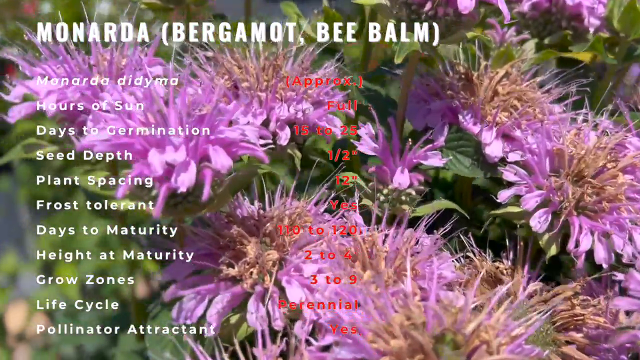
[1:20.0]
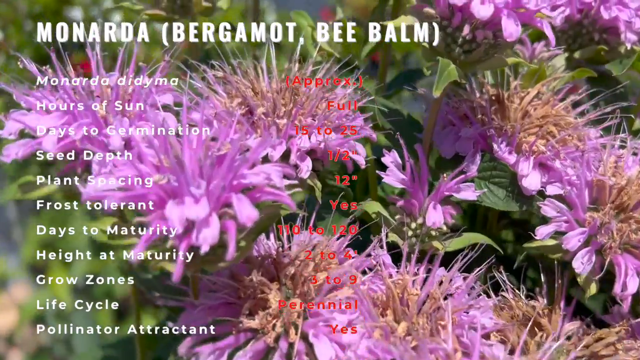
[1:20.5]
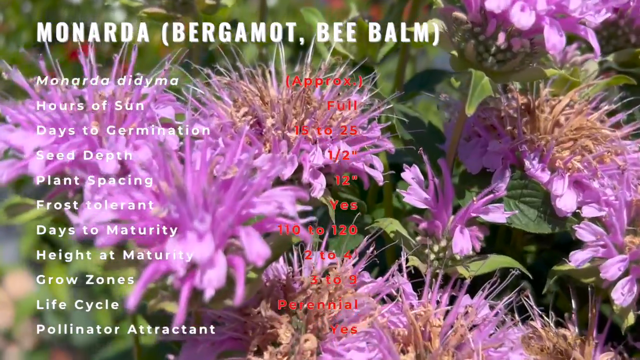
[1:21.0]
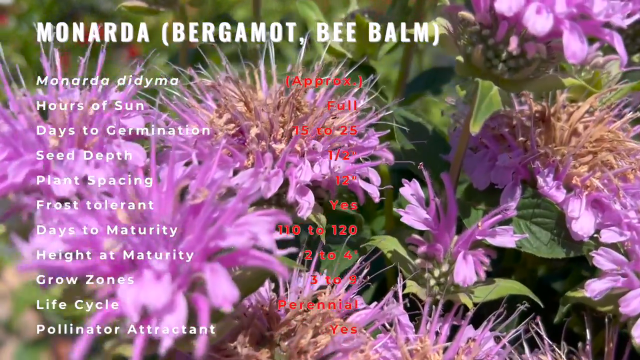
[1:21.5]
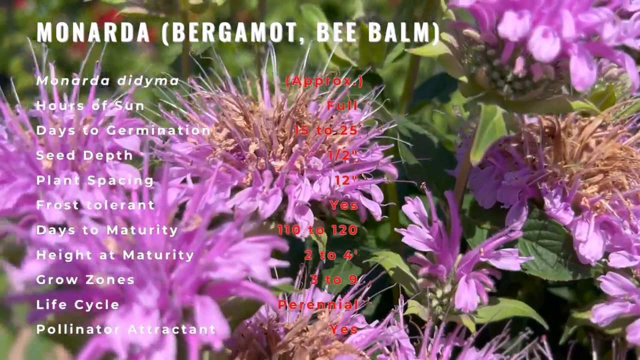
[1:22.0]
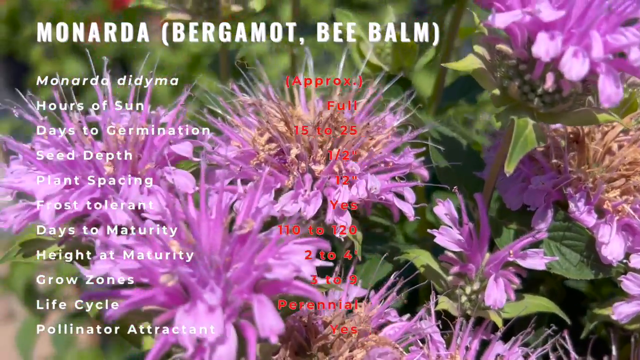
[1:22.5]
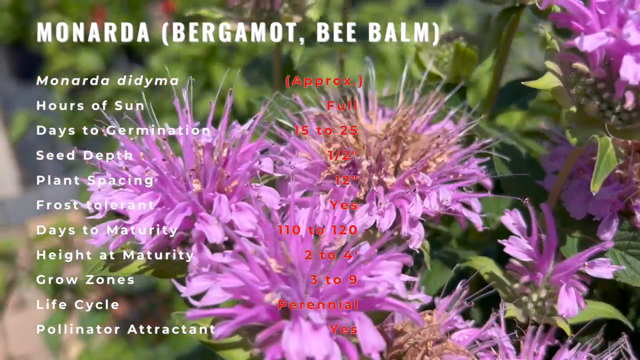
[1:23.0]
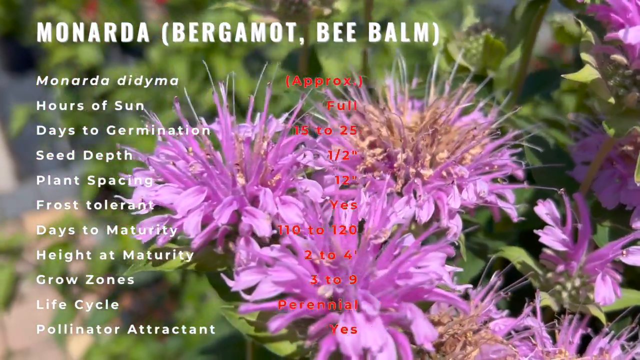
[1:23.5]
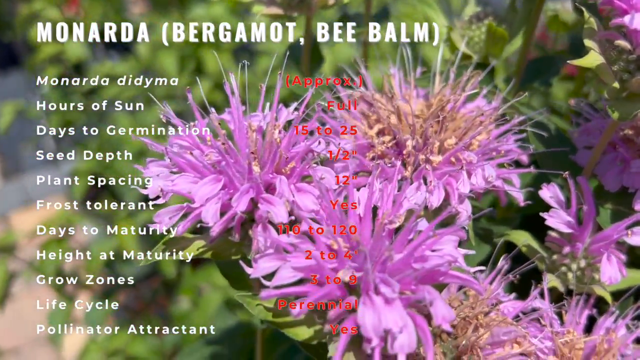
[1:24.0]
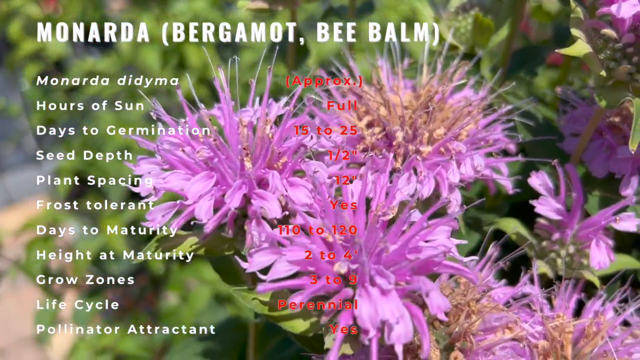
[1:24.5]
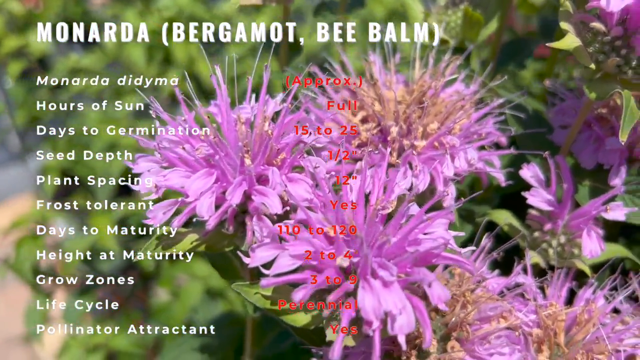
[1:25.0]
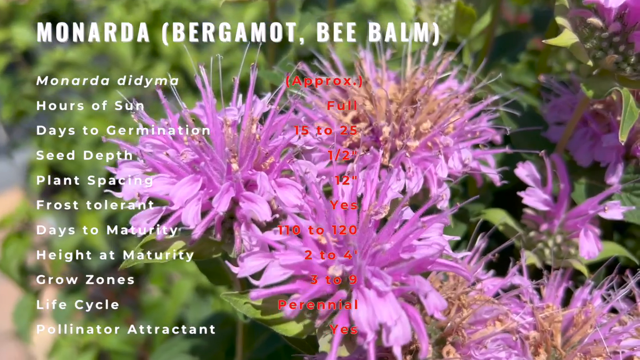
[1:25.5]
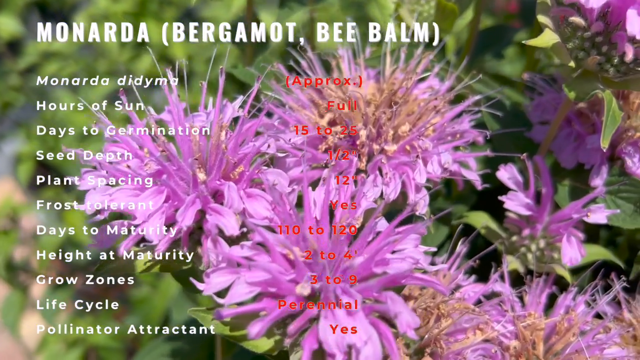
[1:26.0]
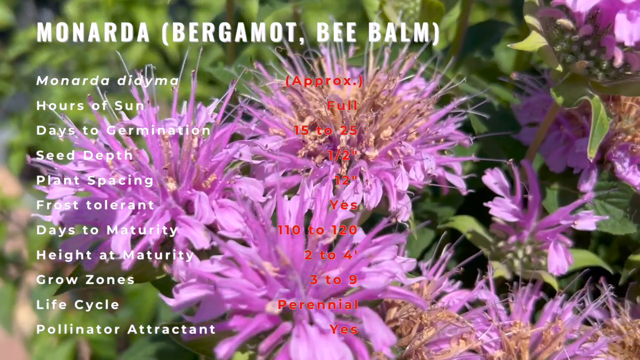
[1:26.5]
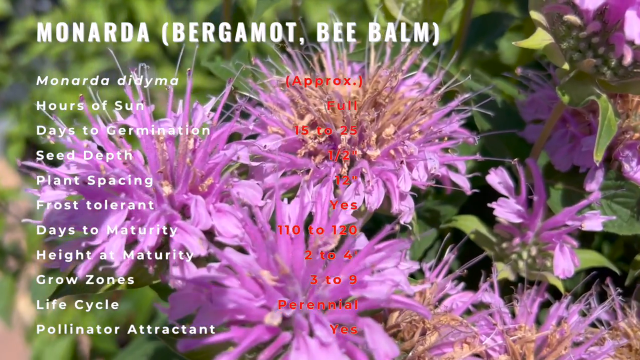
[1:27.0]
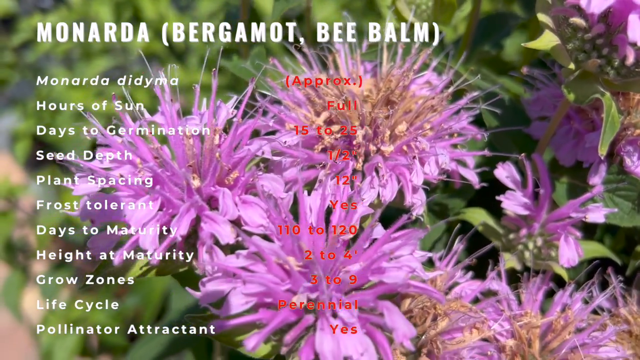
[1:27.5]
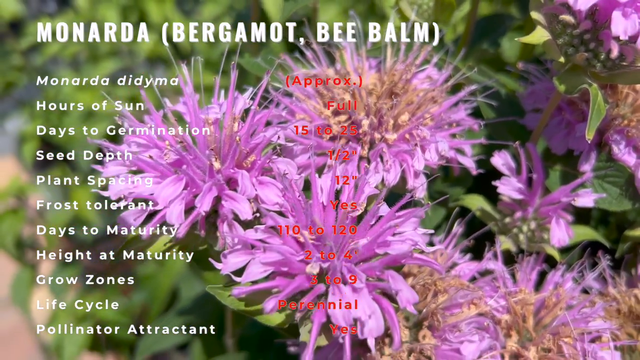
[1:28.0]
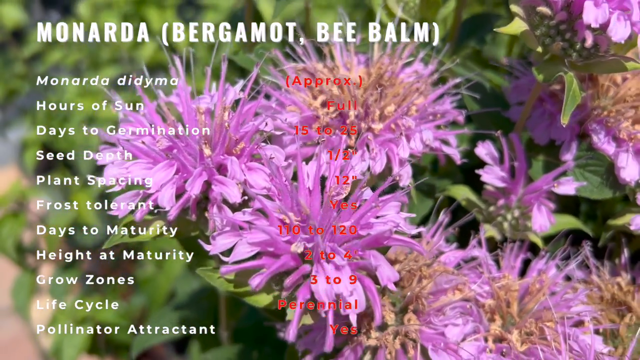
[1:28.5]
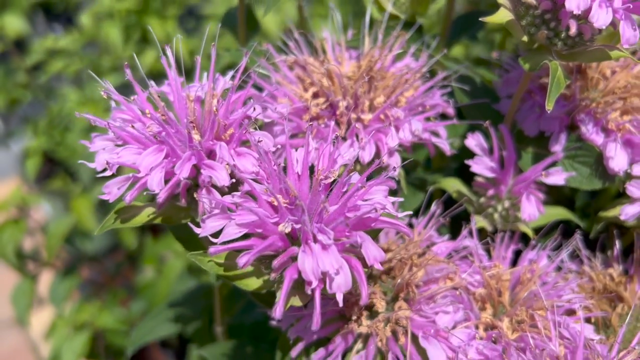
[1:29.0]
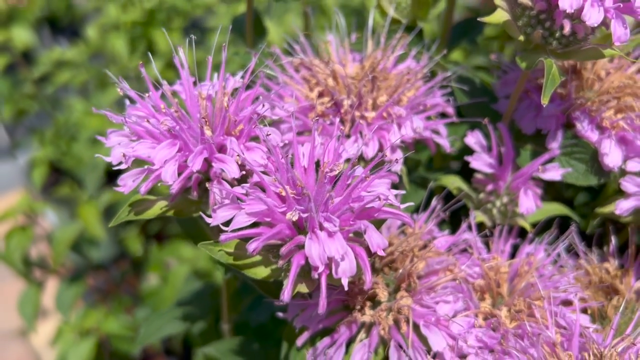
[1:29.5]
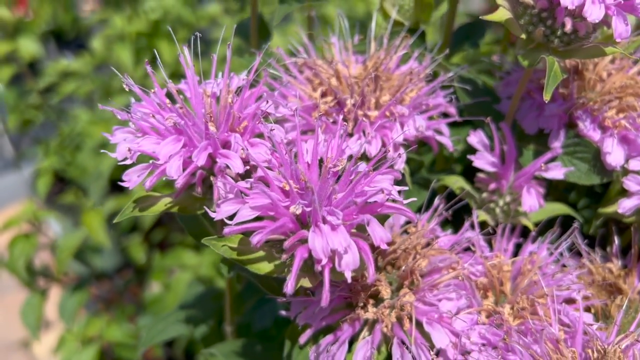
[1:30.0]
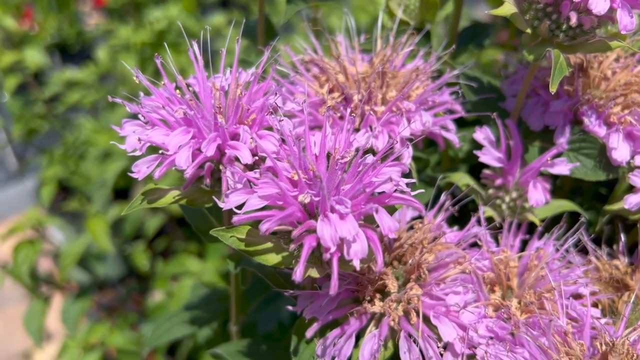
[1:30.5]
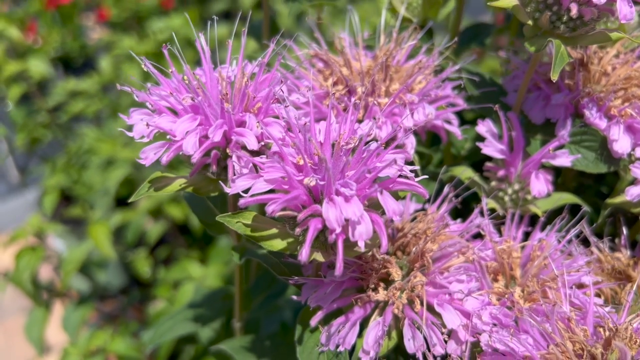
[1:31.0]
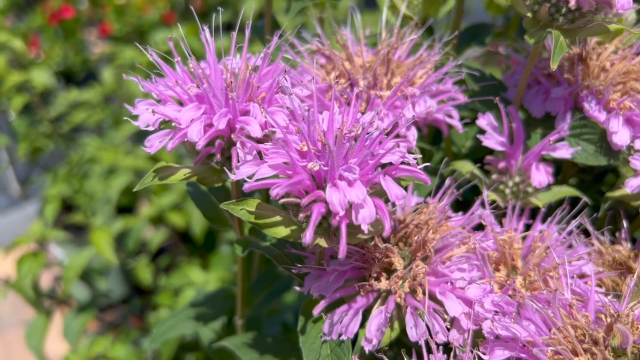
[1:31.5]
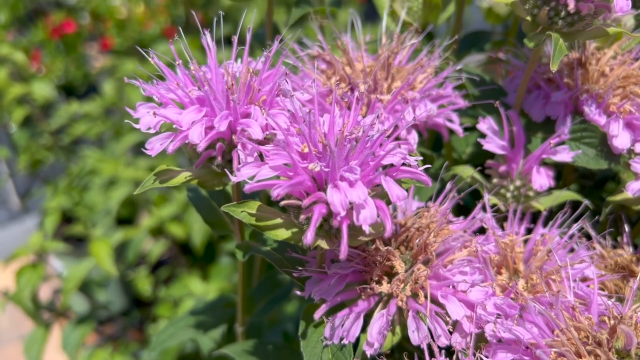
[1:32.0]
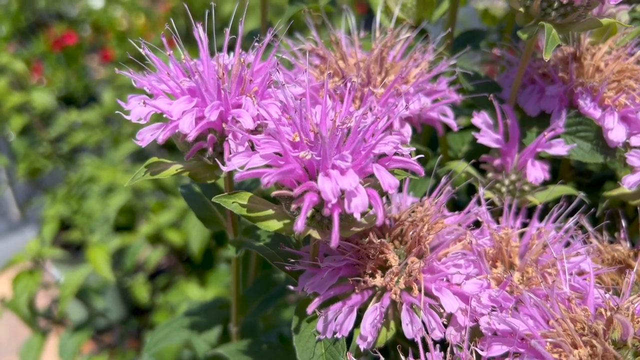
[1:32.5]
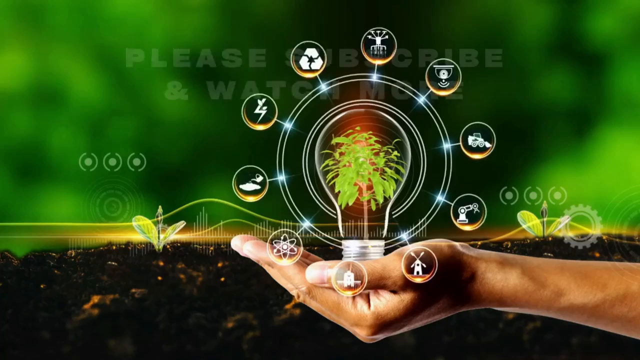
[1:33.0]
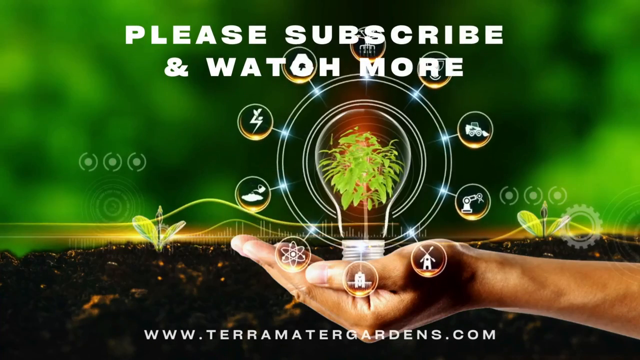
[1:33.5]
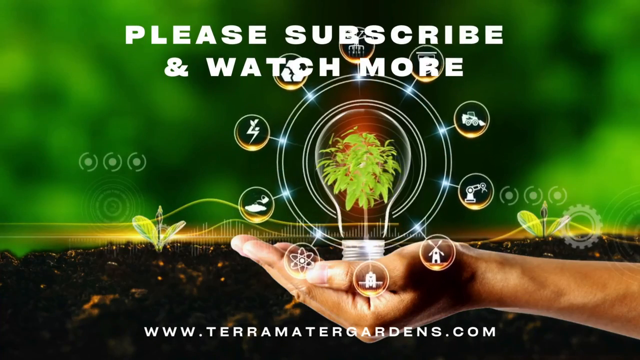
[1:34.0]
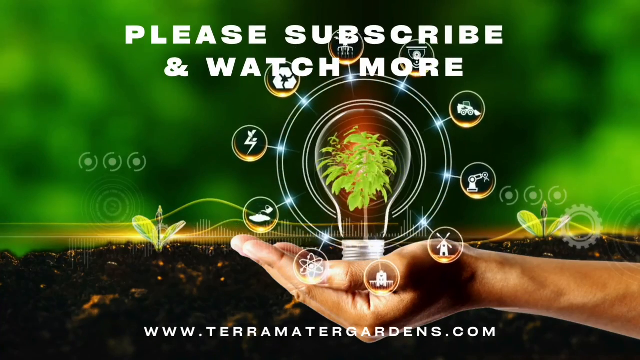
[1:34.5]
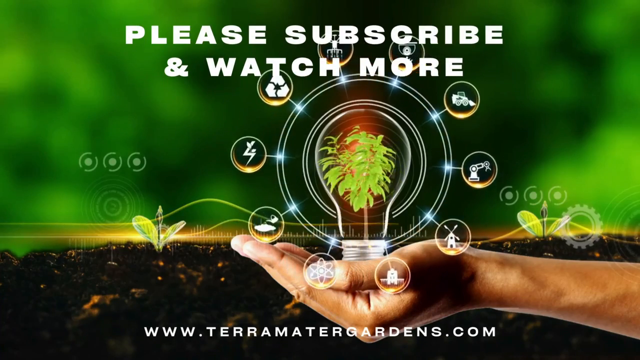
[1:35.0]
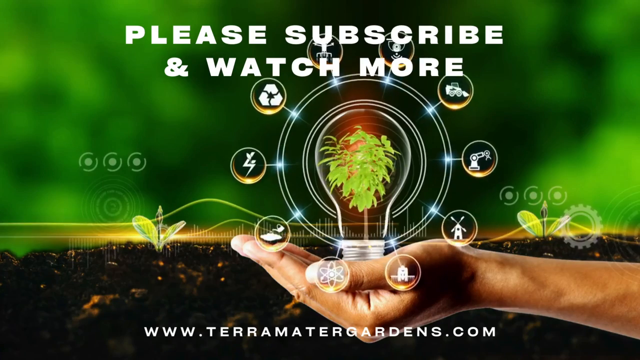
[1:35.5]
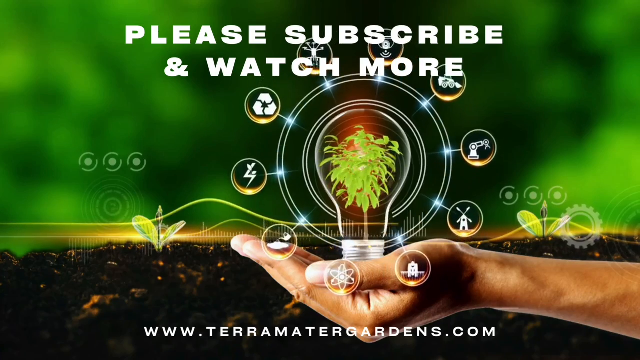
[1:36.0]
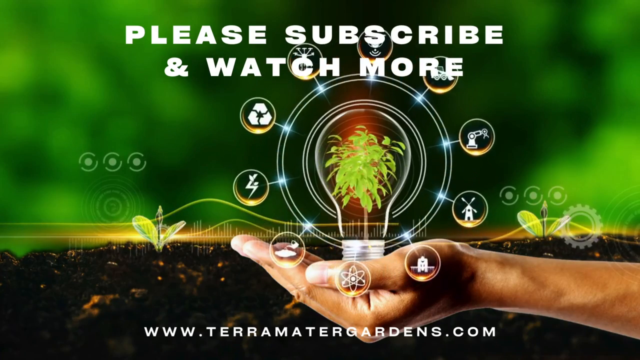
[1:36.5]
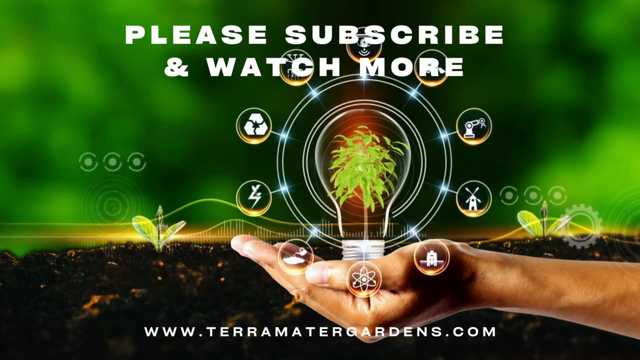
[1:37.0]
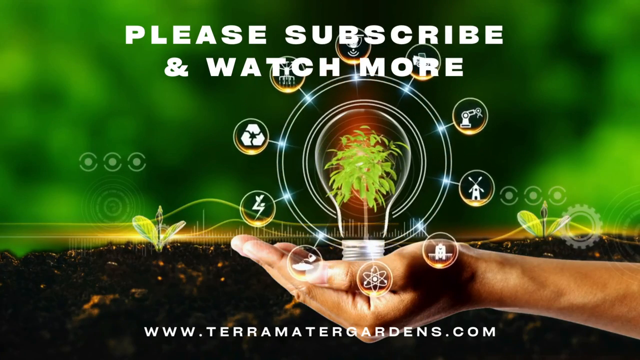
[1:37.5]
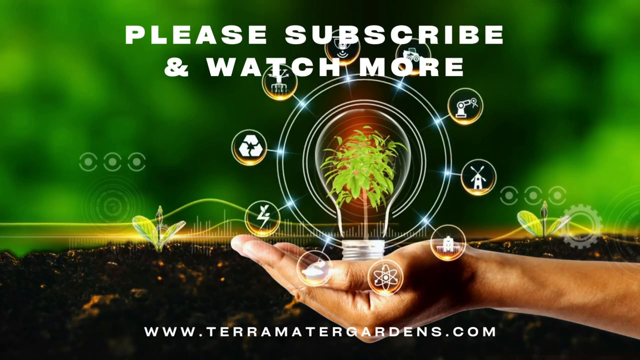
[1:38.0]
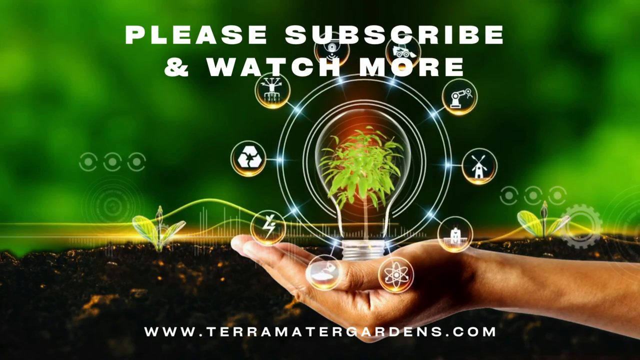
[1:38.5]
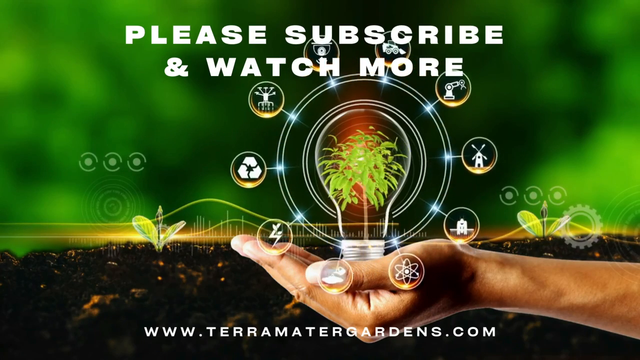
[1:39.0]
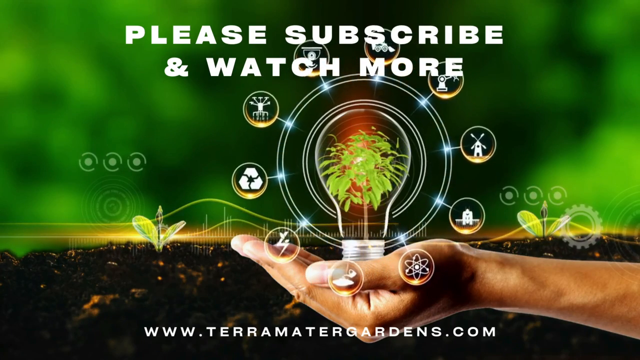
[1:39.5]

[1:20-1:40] A plant has violet flowers; the younger ones are completely violet, with all their petals violet, while the older ones are kind of brown in the middle and dying out a little. The leaves are tiny, green and a lot smaller than the flowers. The video cuts to a graphic image of a person with their palms sticking up and an animated light bulb, then cuts back to the clusters of violet flowers. In front of them is a list of the plant's characteristics with the title and the plant's name, "Monarda"; the list includes hours of sun, days to germination, frost tolerant and days to maturity, along with other characteristics.